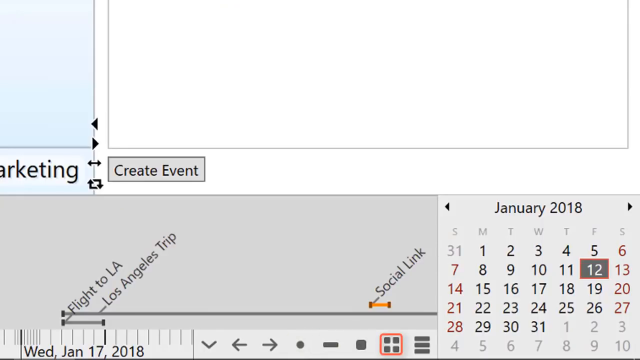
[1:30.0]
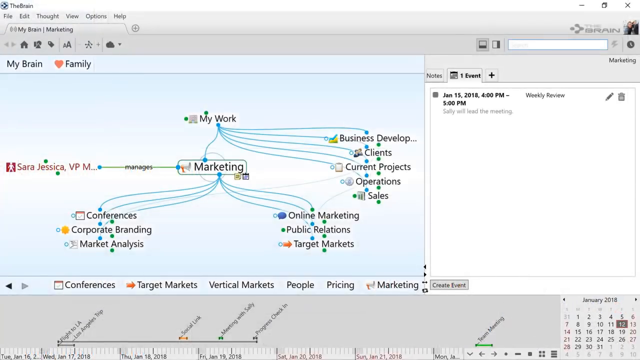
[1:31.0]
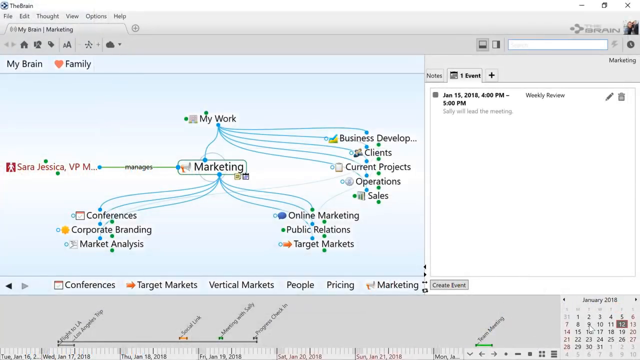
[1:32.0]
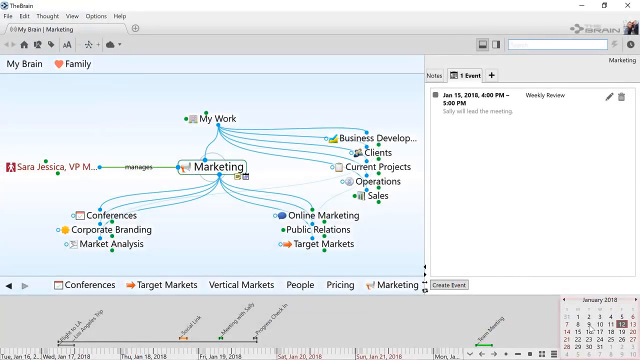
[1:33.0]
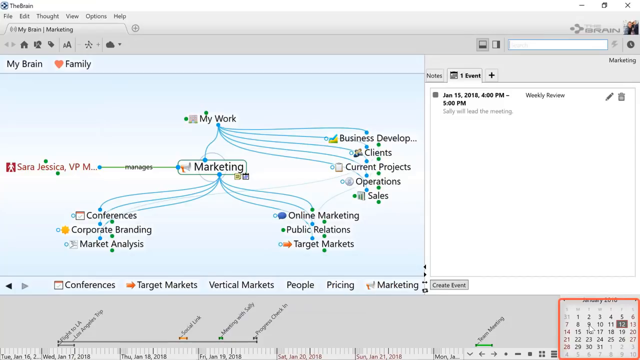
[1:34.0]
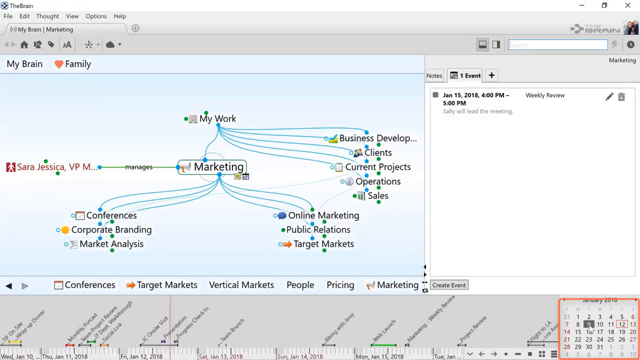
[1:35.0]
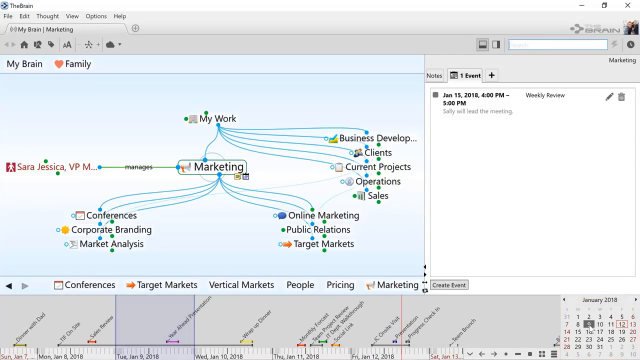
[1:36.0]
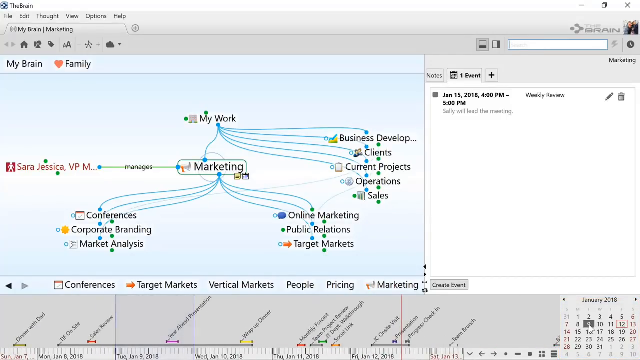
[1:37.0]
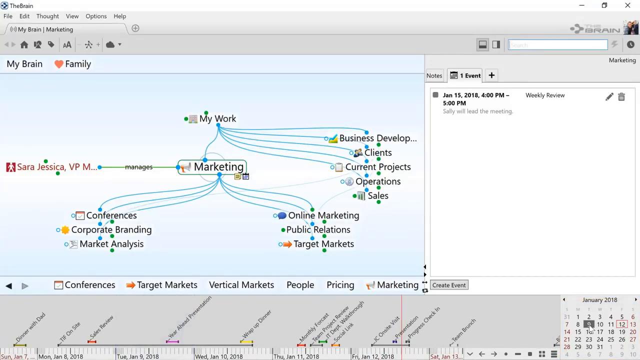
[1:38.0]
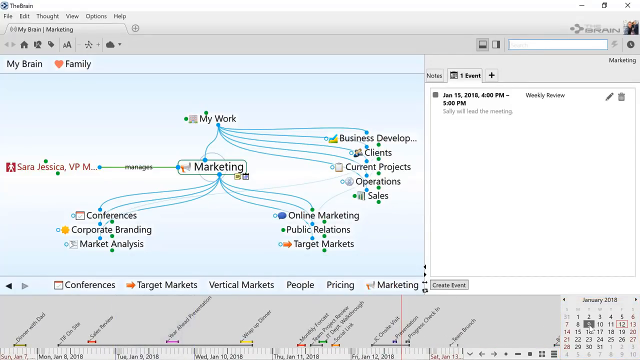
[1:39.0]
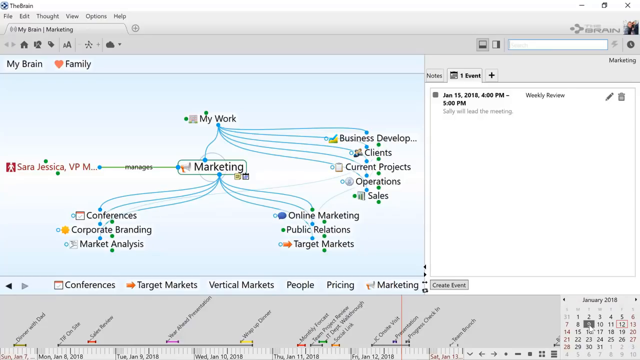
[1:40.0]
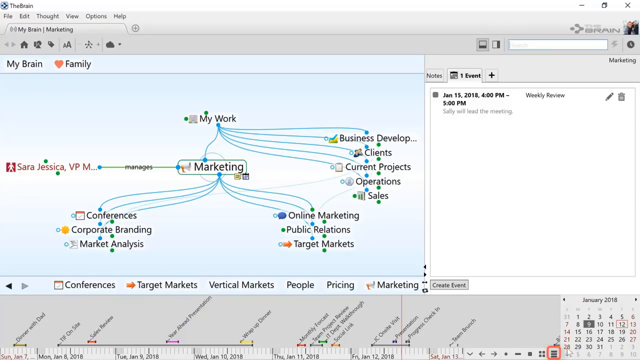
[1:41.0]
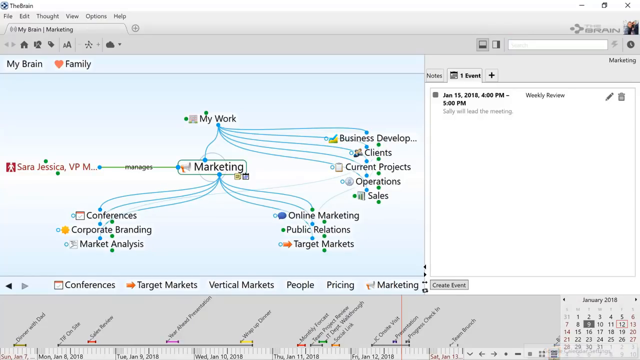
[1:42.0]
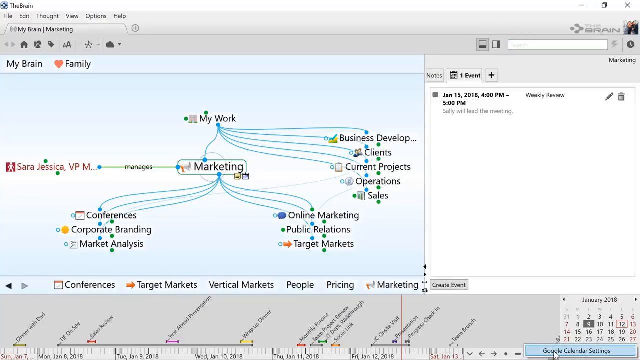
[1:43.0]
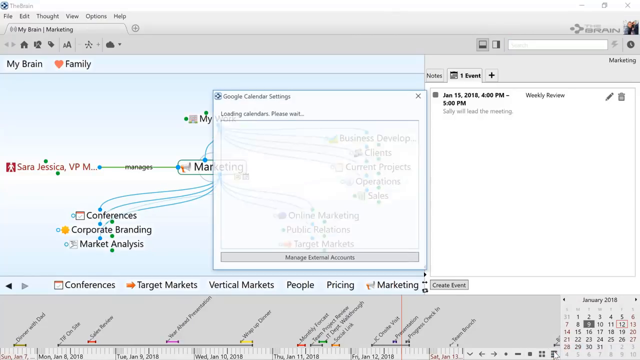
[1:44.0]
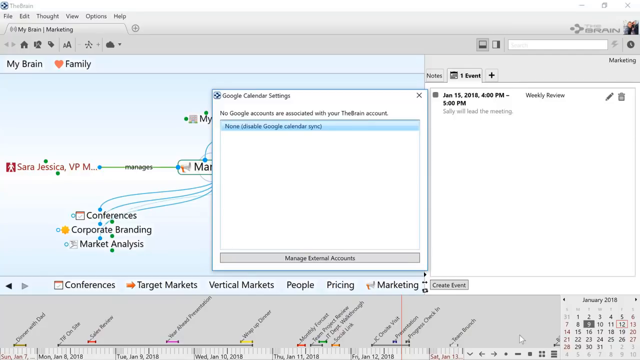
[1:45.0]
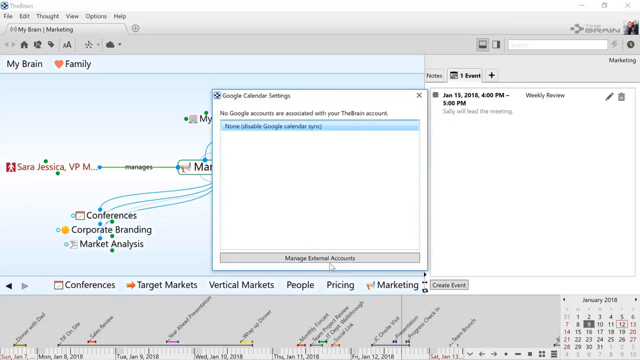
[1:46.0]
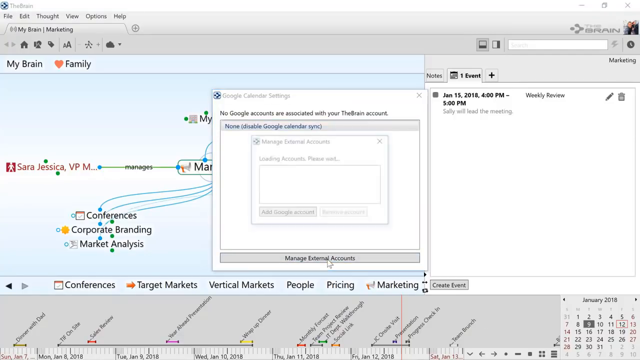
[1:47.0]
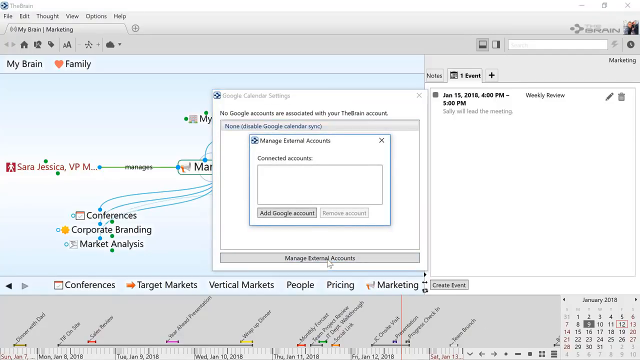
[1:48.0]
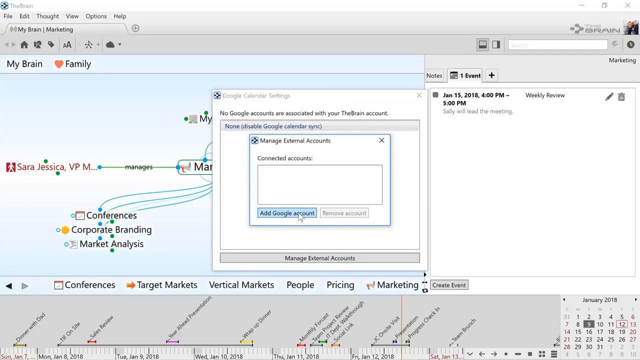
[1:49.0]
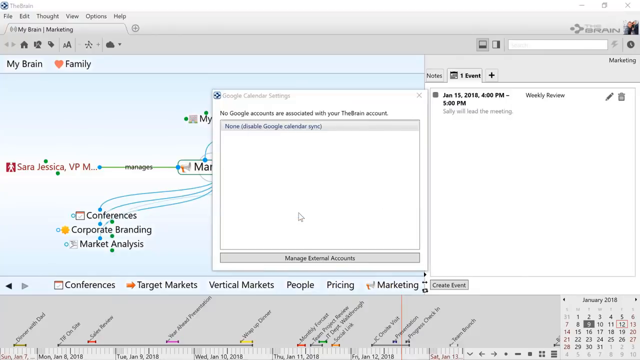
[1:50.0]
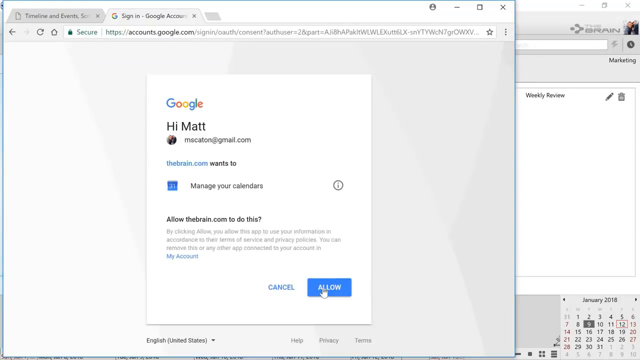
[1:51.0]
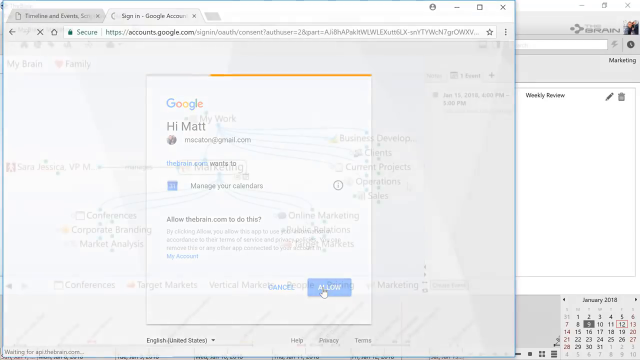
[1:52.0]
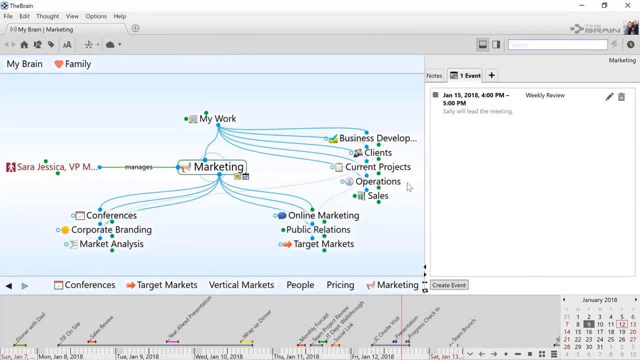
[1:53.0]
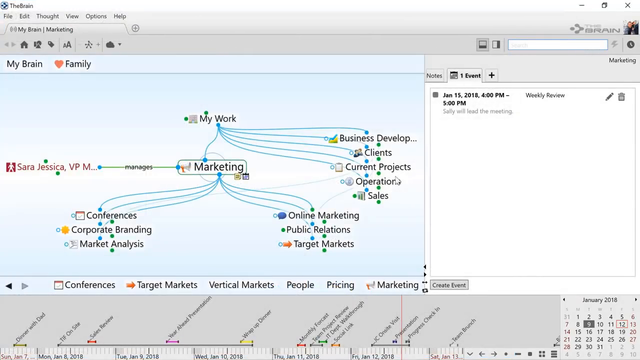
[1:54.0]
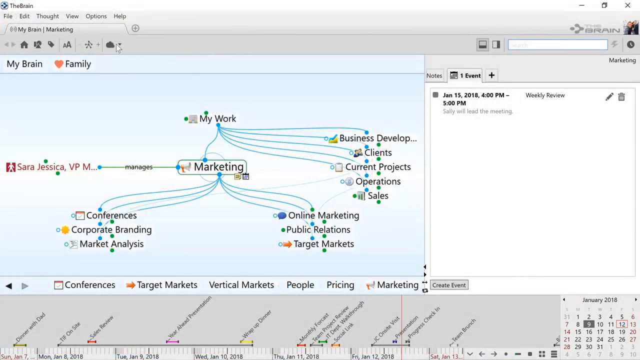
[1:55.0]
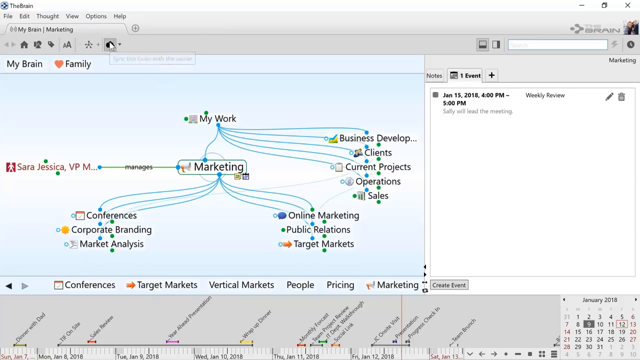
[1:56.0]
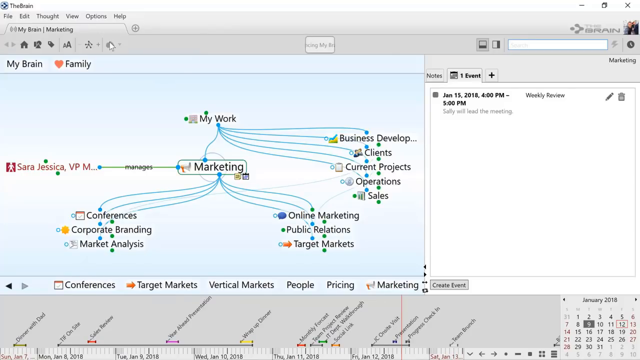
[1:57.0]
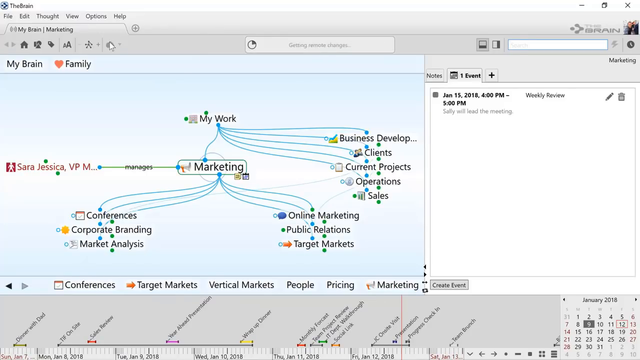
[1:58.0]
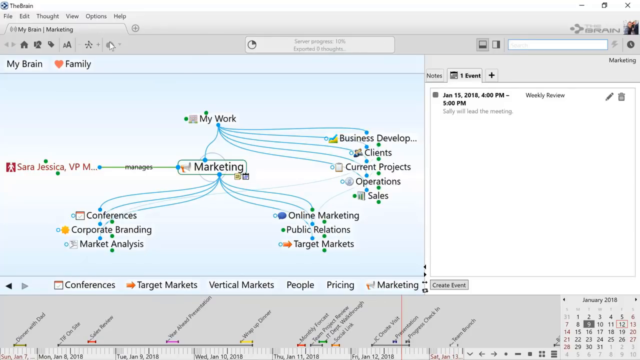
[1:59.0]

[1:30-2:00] After the social link, a wide shot shows "my work" and marketing, with the timeline moving left to right and colors under events such as red, purple, yellow, green, and orange. A green pop-up titled "calendar settings" says "No Google accounts are associated with your the brain account," showing "none," "Disable Google Calendar Sync," and an option "Manage external accounts," which is selected. Another box titled "Manage external accounts" with "Connected accounts" appears, and "add Google account" is selected. A "Sign in to Google" screen shows the person's name and email address, with text reading "Thebrain.com wants to manage your calendars" and Cancel and Allow buttons; Allow is selected, giving the calendar access. A sync button is then clicked, located where there is a home button, a font button, and a cloud with a drop-down arrow next to it. Data begins to sync, with text saying it is syncing data and a progress meter.